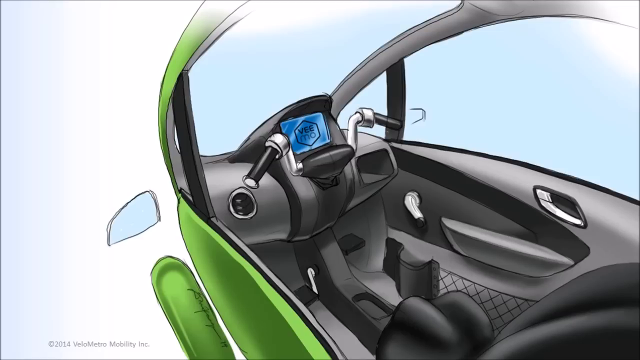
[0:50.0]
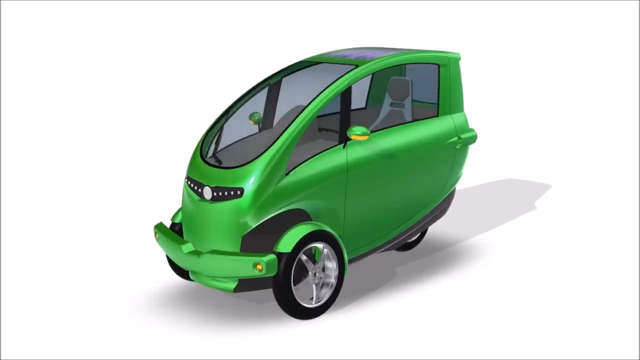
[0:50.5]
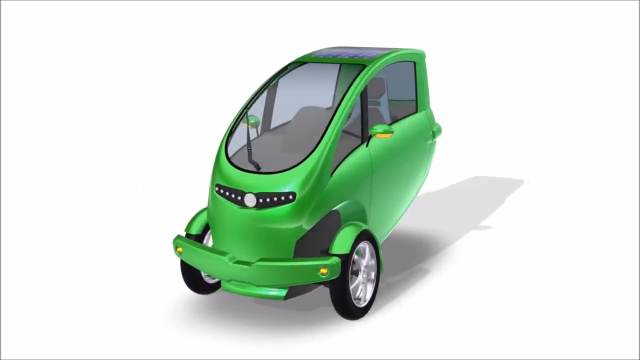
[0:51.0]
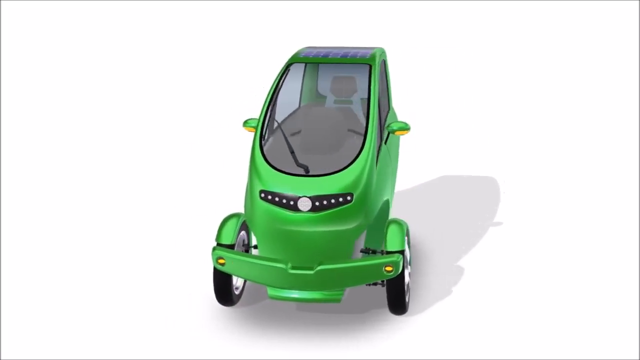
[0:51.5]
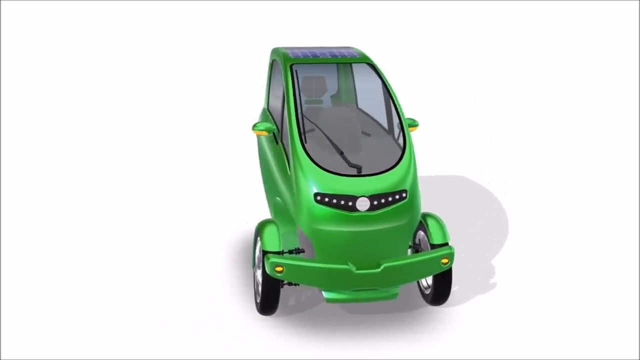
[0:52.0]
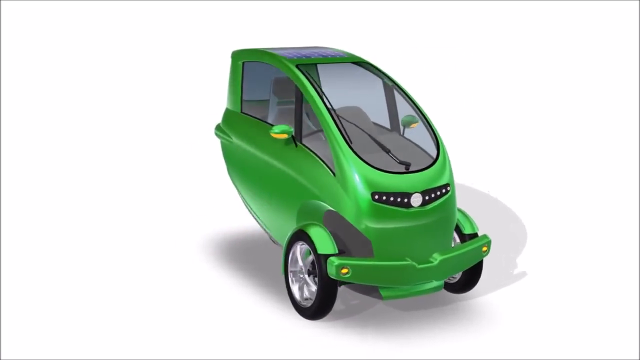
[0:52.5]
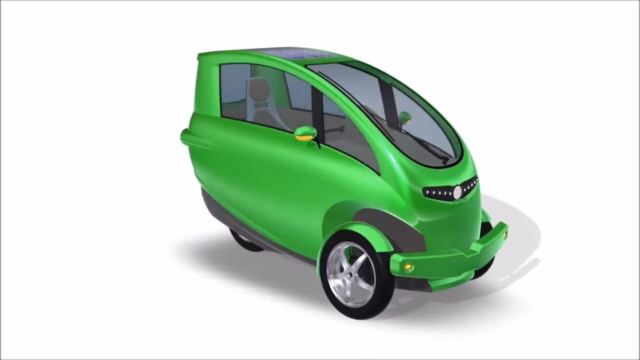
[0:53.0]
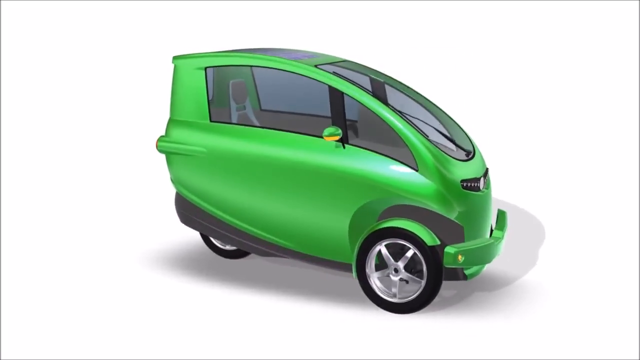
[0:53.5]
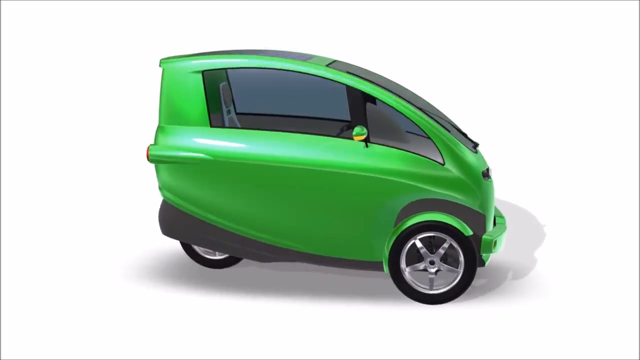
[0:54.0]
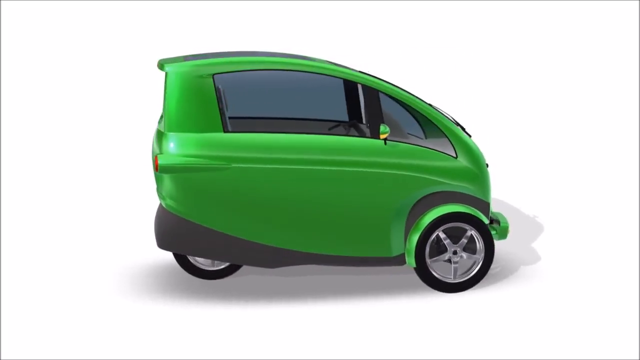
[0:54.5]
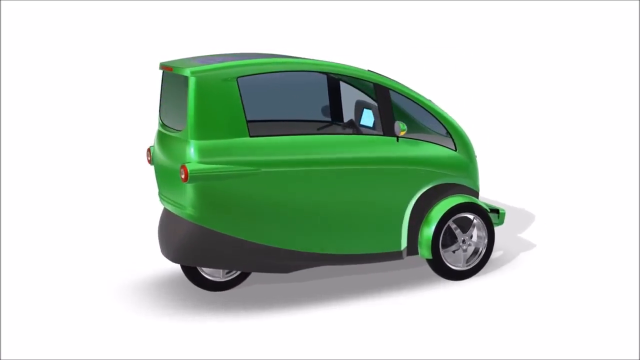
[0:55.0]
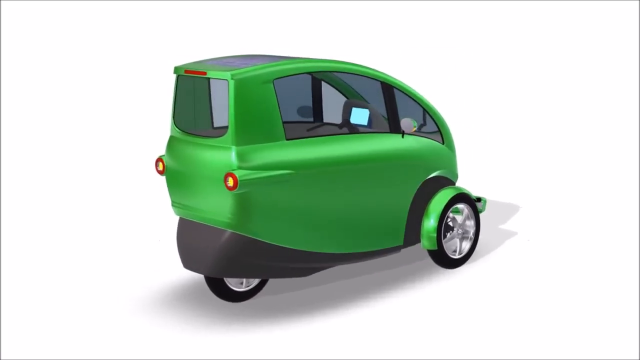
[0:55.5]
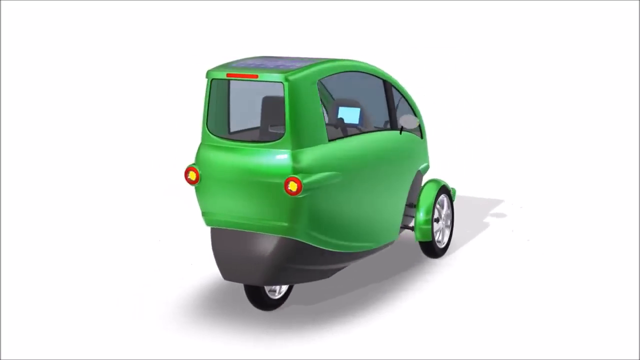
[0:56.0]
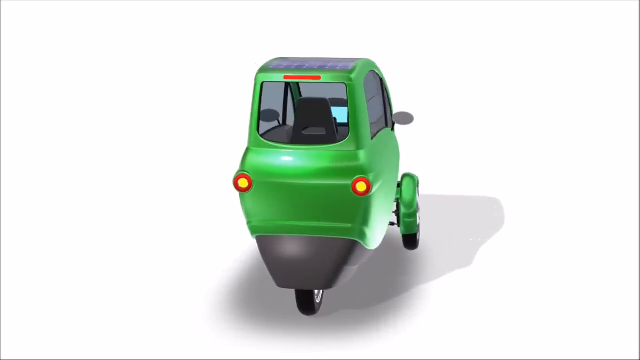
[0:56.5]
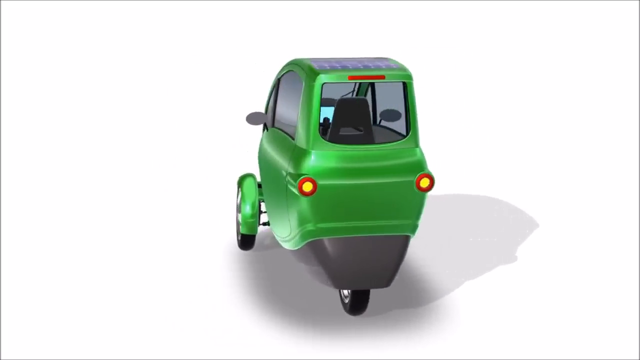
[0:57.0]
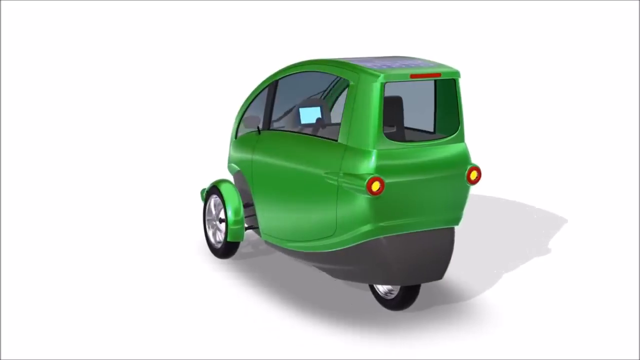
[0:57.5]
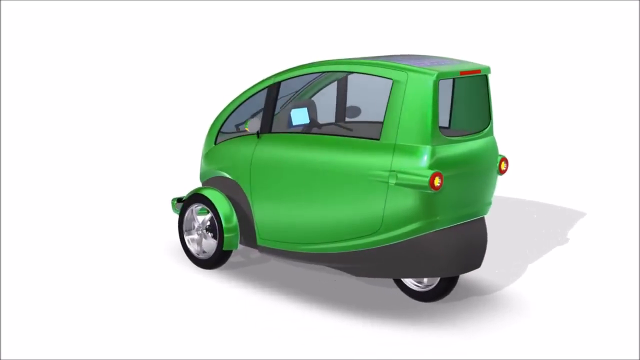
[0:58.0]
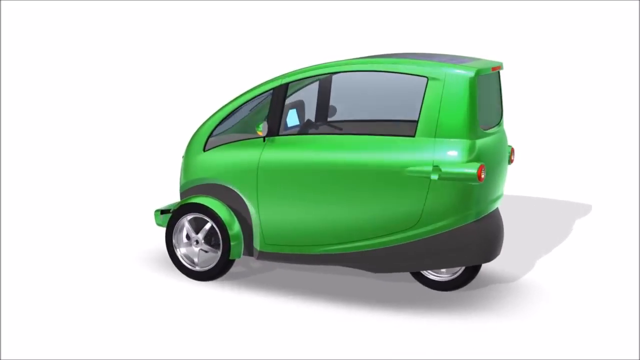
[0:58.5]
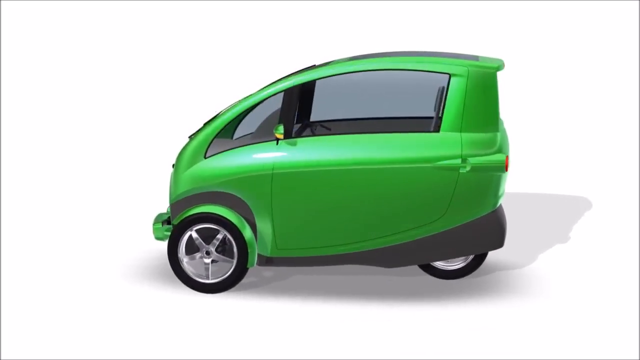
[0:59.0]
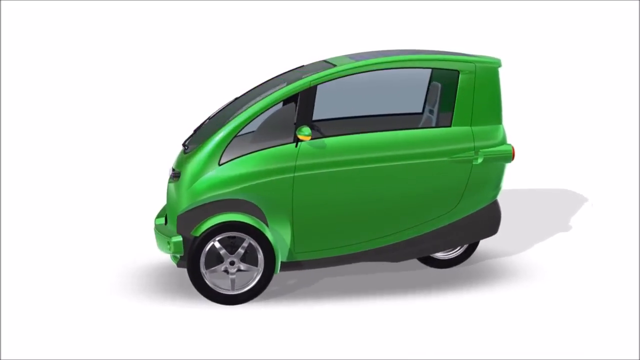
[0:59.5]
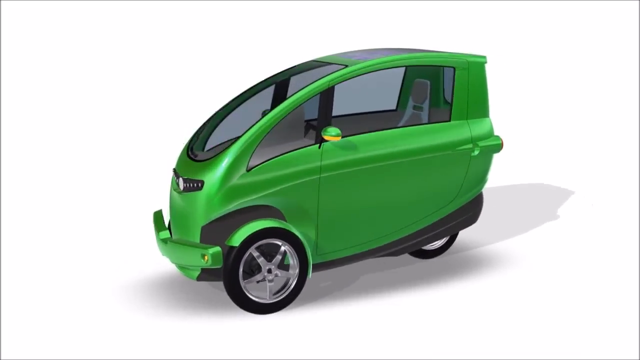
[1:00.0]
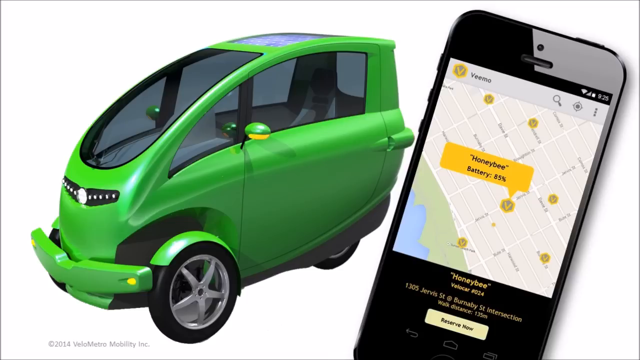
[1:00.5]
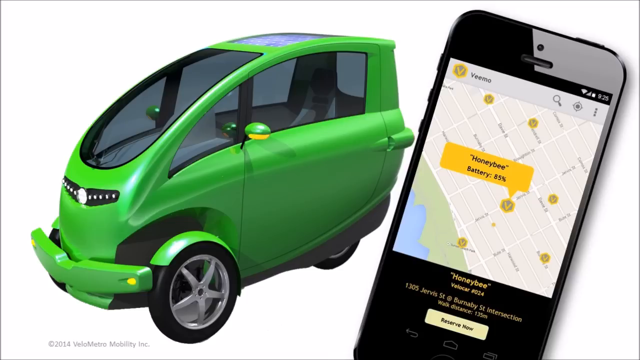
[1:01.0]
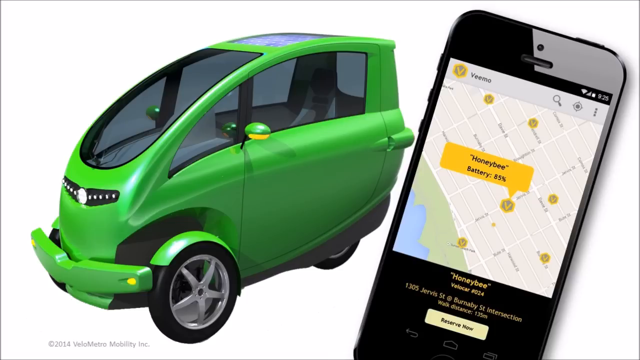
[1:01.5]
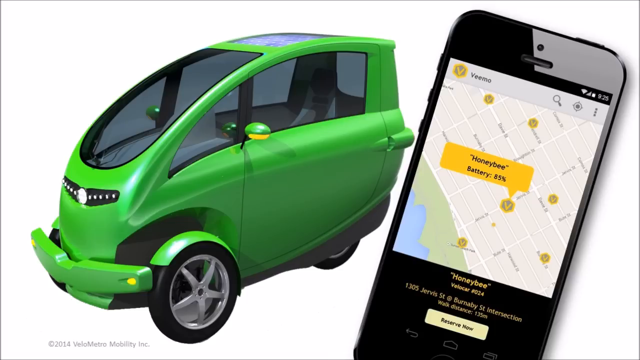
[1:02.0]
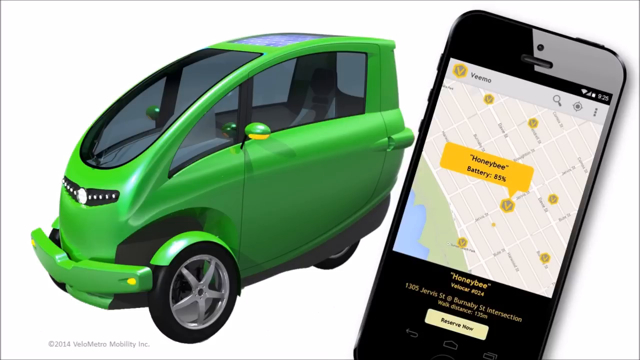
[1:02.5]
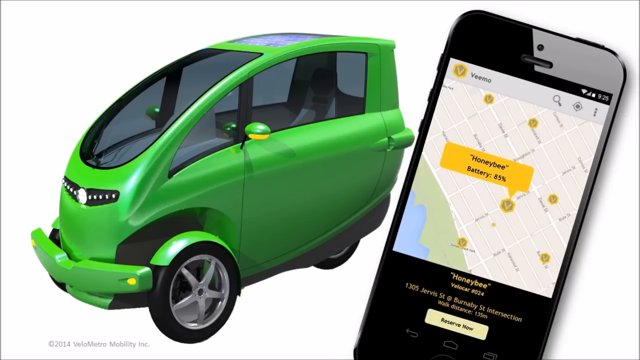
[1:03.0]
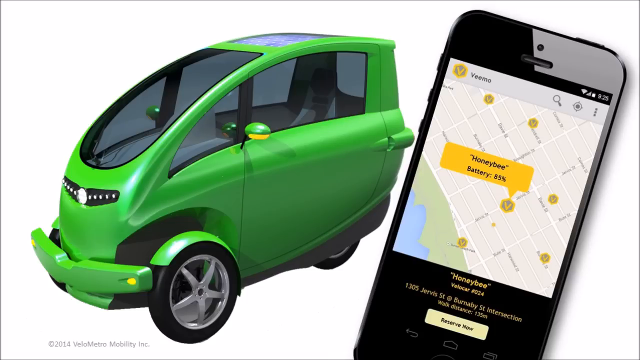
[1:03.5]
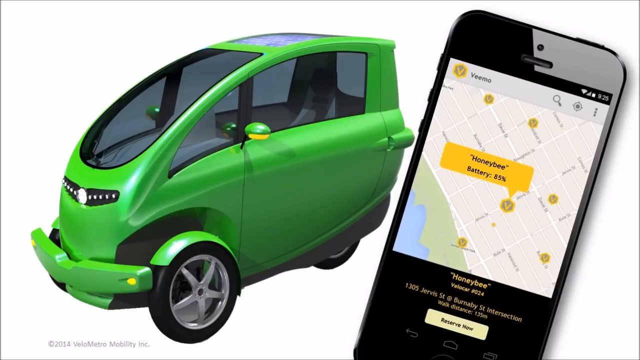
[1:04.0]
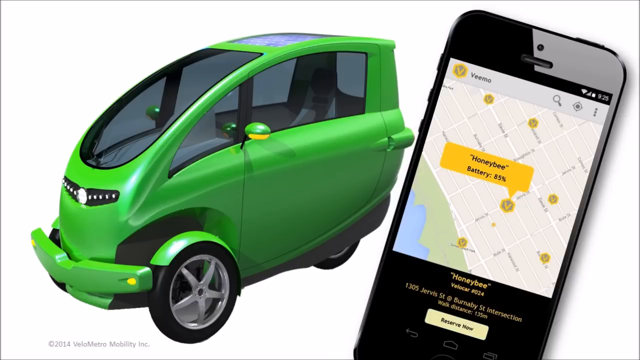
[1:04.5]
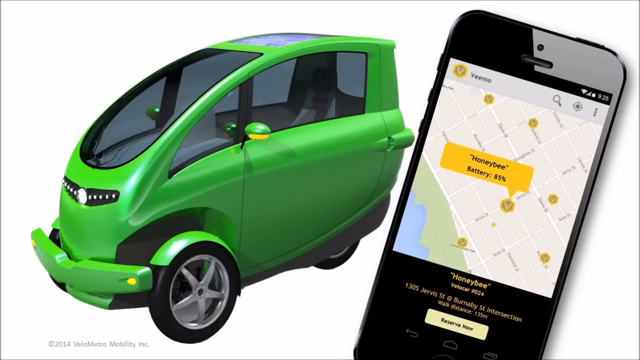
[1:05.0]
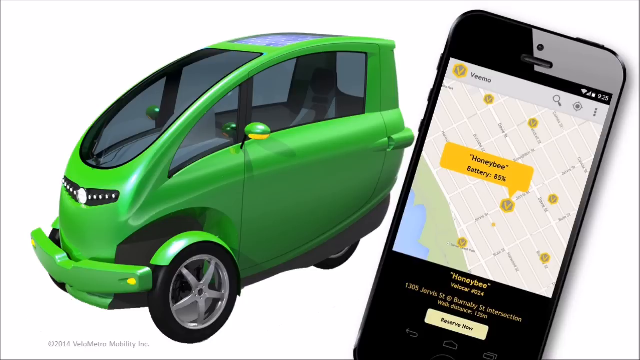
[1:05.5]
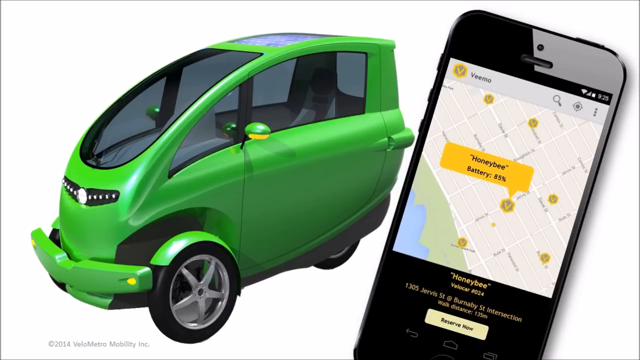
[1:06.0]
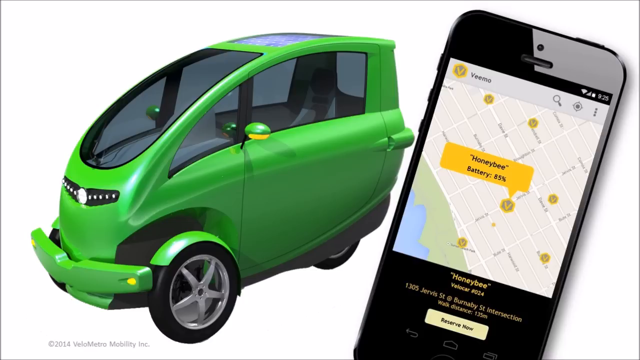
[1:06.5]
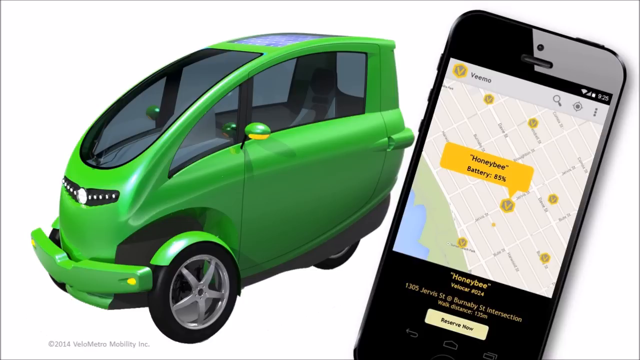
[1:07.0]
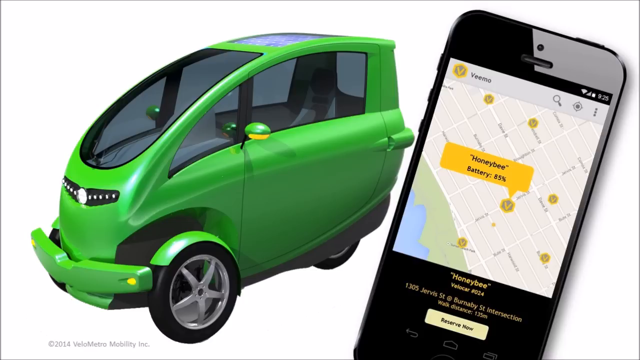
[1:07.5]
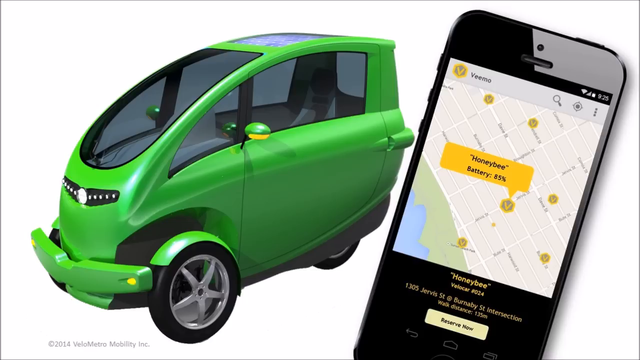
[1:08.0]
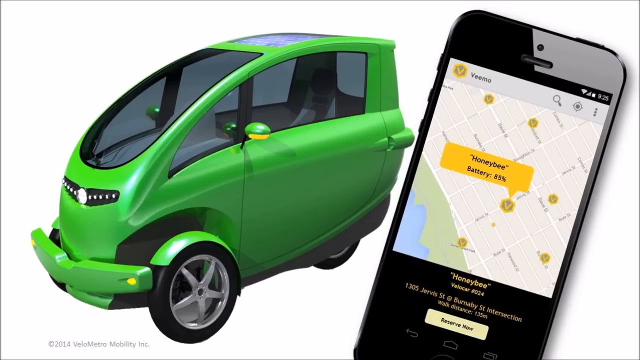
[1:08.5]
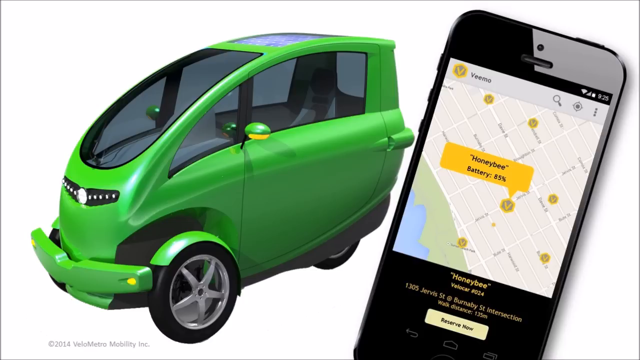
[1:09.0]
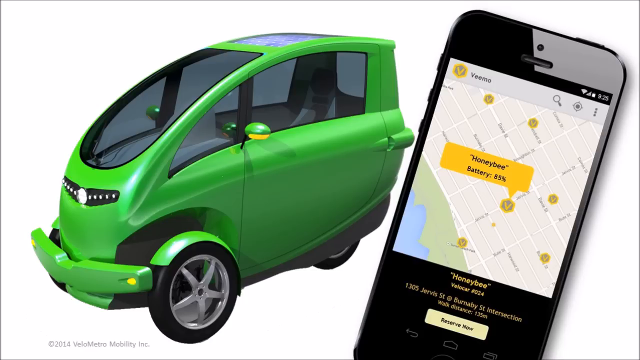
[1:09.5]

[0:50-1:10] The VeloCar is shown in the middle of the screen, turning 360 degrees so its sides, back and front are visible. It is very narrow and fits one person, with one tire in the back and two in the front. The inside has handlebars like a bike. The bumper is the same color as the car, and it looks like it has one windshield at the front that goes up and over the driver's head. The car is hooked up to a phone, which seems to show something about a battery. Then something flashes on the screen very quickly: a gray image with one gold piece, which looks like honeycomb shapes.